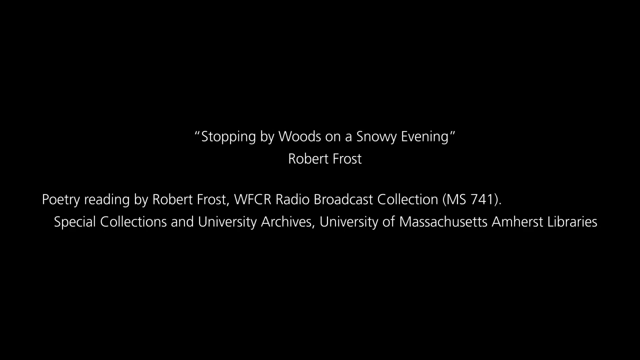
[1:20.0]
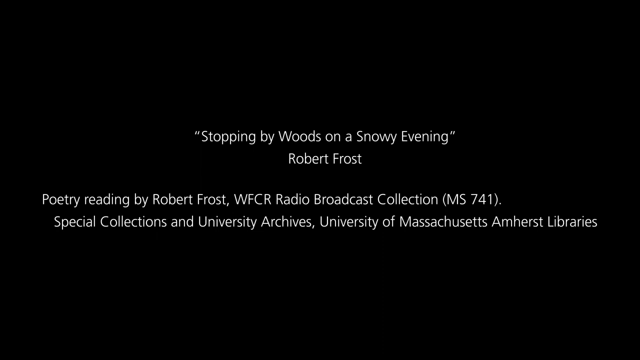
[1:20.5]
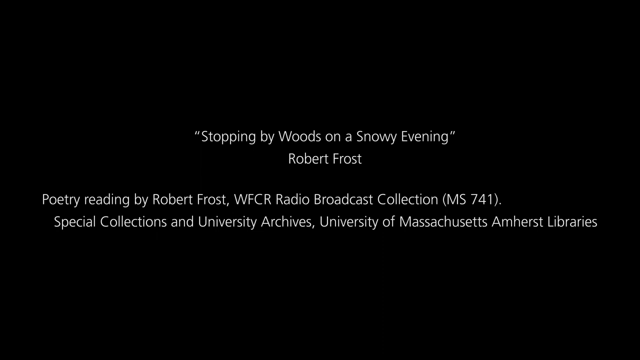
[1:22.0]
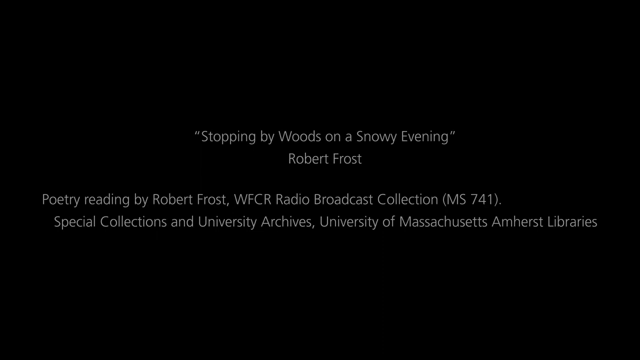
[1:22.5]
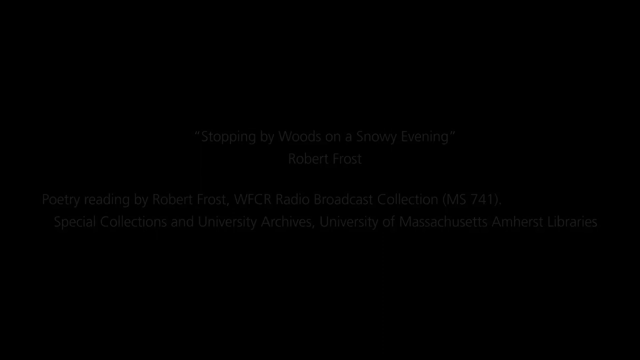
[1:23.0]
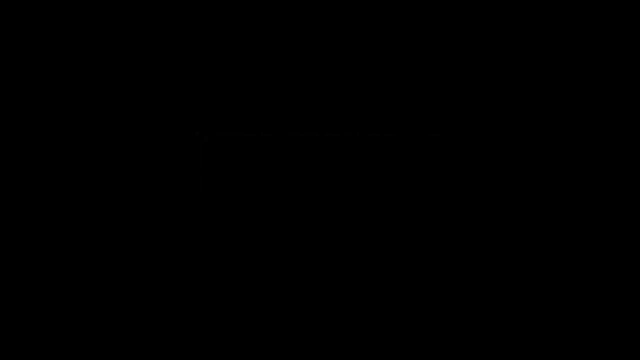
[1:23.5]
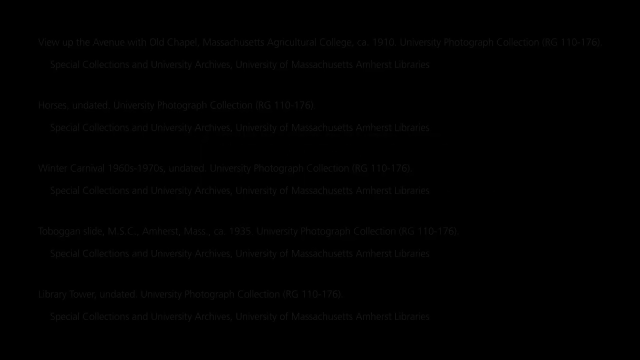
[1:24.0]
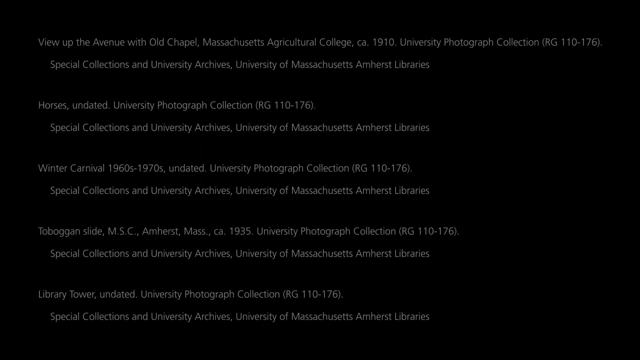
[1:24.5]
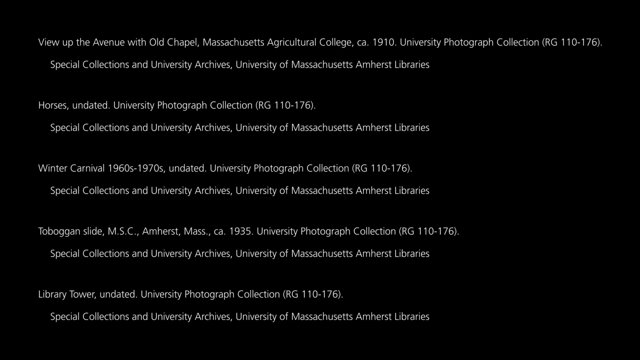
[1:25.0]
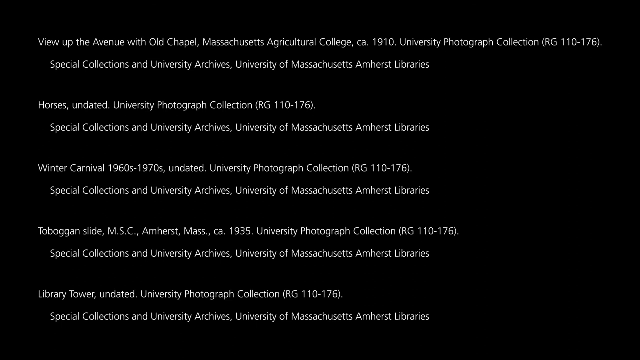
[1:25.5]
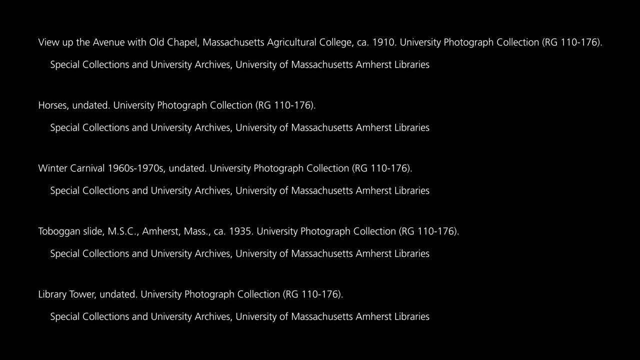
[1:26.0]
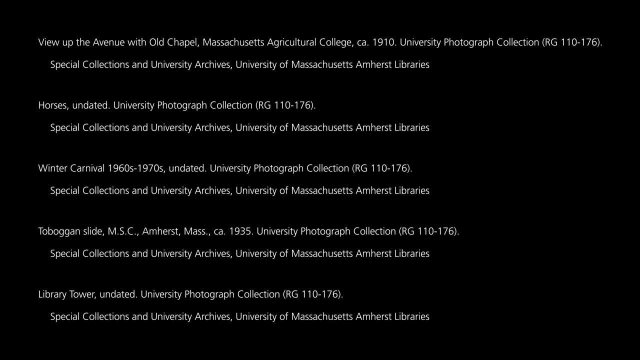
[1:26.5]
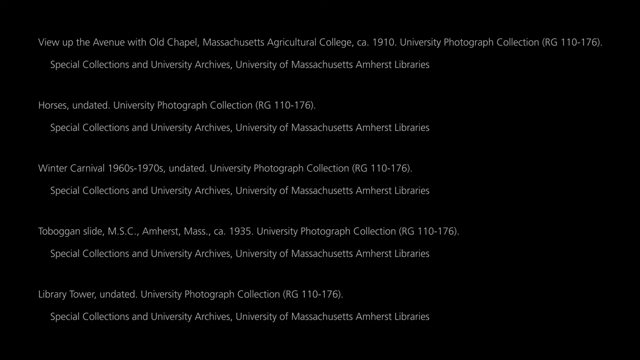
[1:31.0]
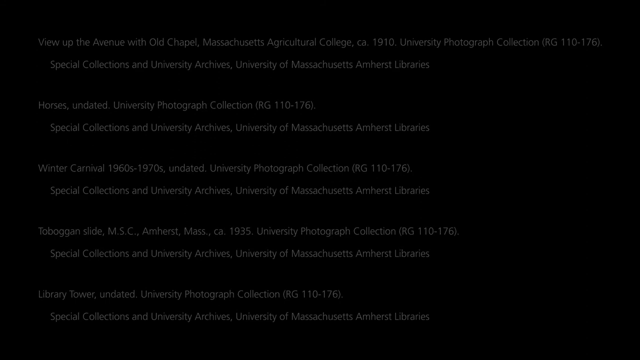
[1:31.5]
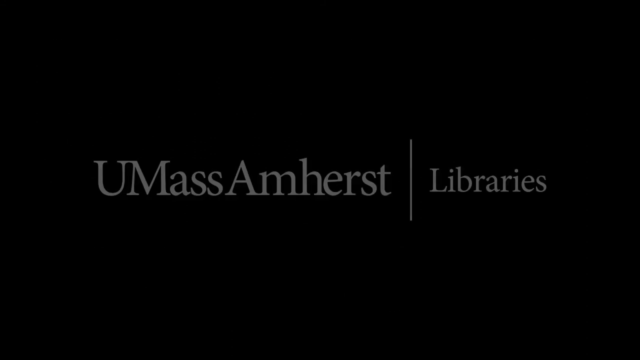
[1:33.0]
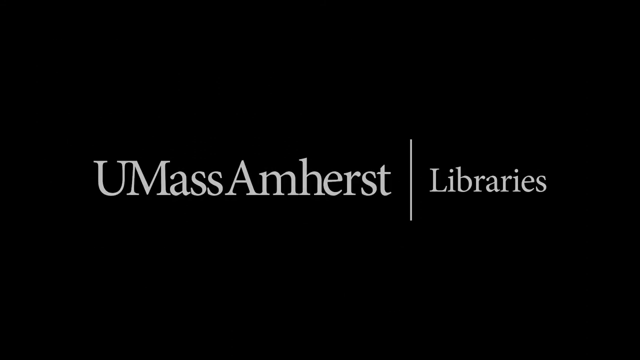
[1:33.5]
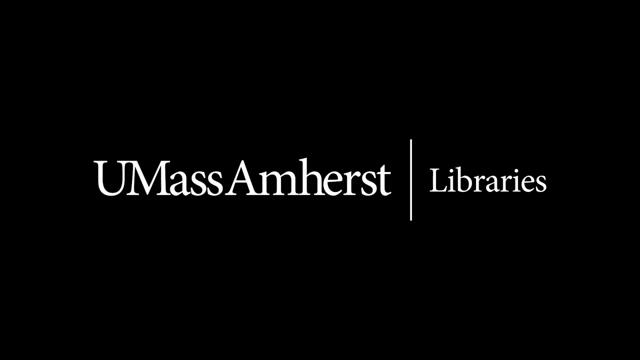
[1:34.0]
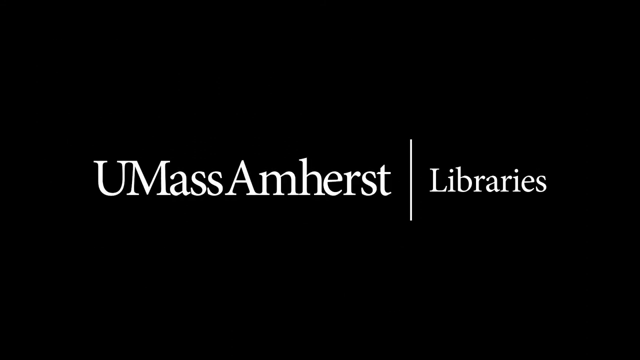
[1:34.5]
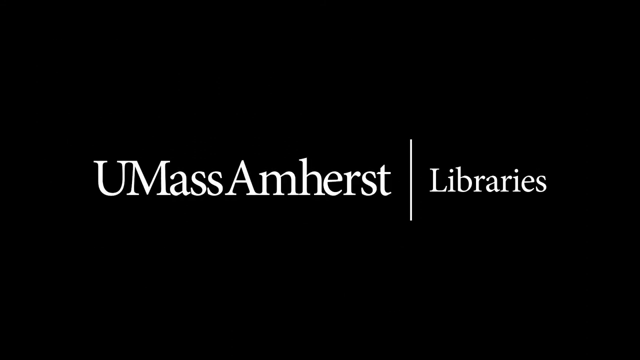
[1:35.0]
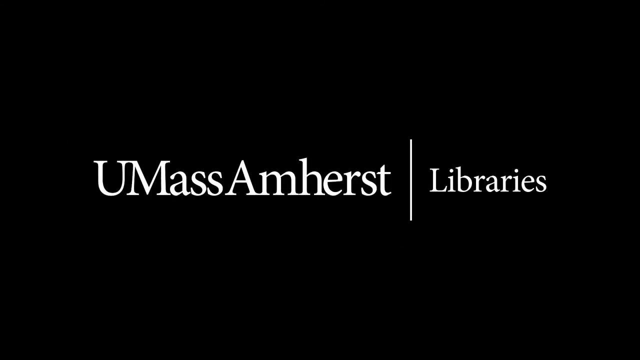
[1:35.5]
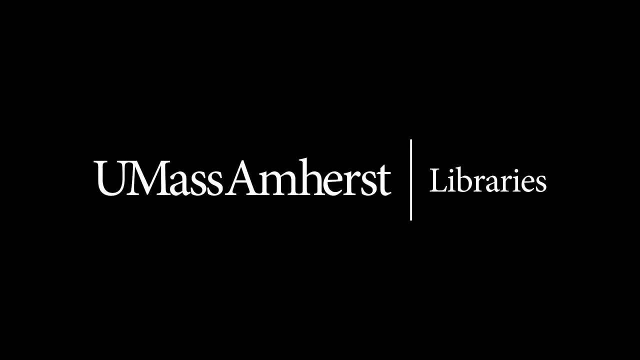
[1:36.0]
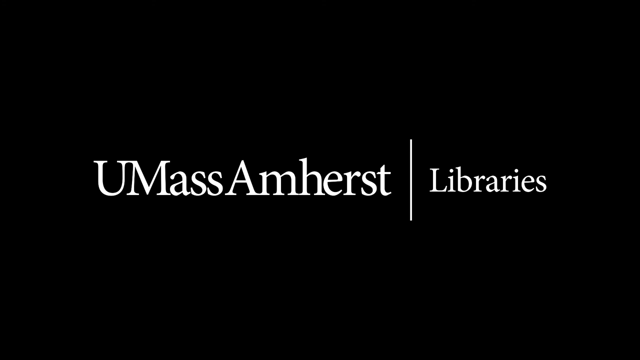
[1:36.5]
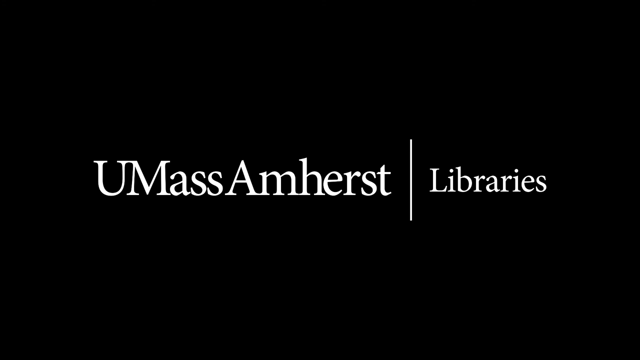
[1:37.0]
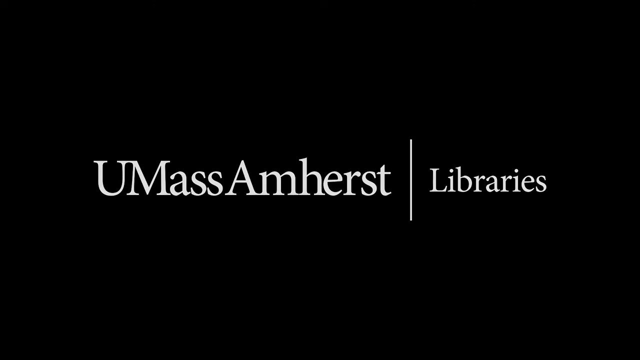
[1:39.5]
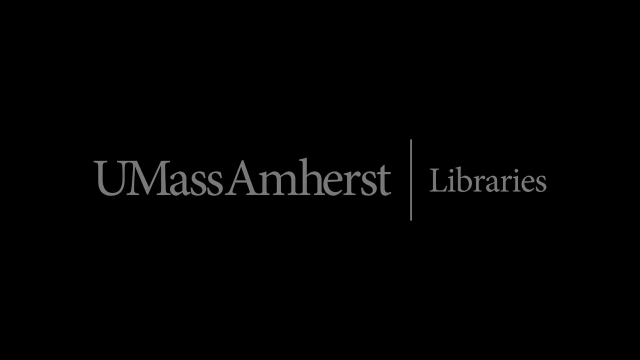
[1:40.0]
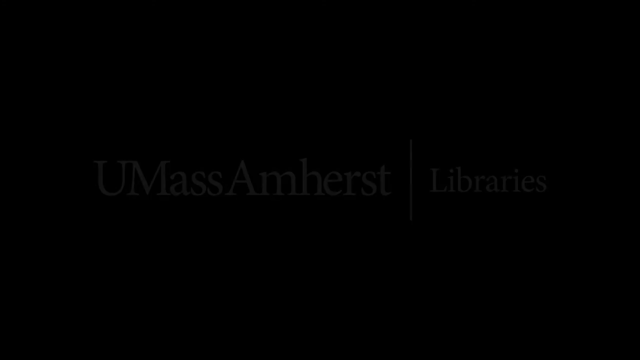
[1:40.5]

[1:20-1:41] The words "stopping by woods on a snowy evening" and the Robert Frost poetry reading credit, citing a WFCR radio broadcast collection and special collections and university archives at the University of Massachusetts Amherst libraries, are written in white, maybe size 16 font, on the black screen. More credit details follow: "avenue with old chapel", "horses undated photo" from special collections and university archives at the University of Massachusetts, "winter carnival 1960s to 1970s undated" from the archives of the University of Massachusetts Amherst library, and "library tower undated", also from the university's libraries. At the very end, "university of massachusetts amherst libraries" appears in a big, large font on a black background.